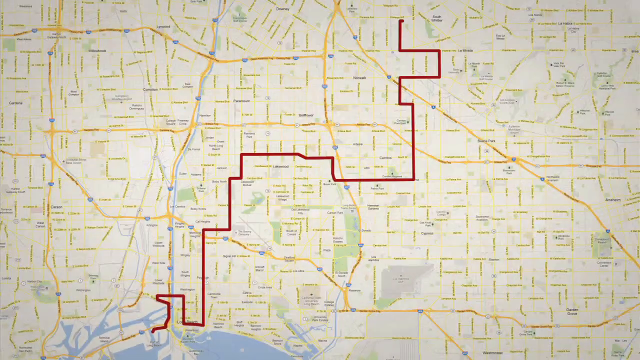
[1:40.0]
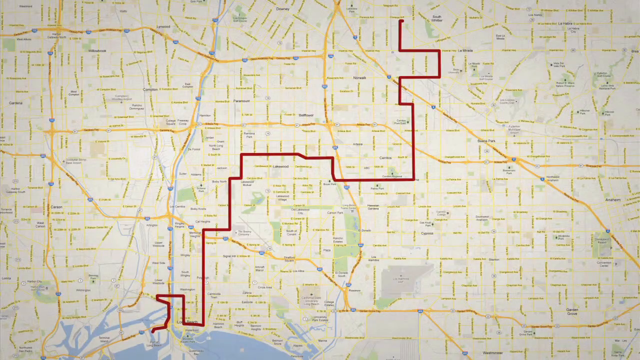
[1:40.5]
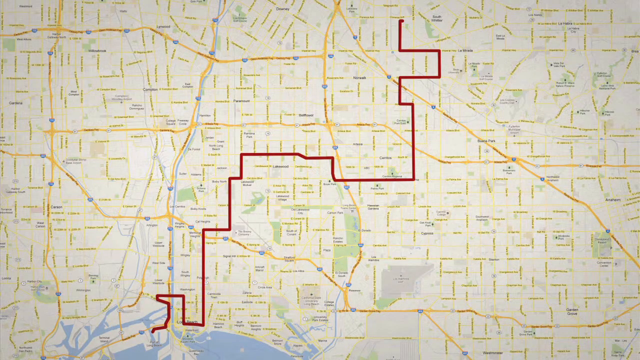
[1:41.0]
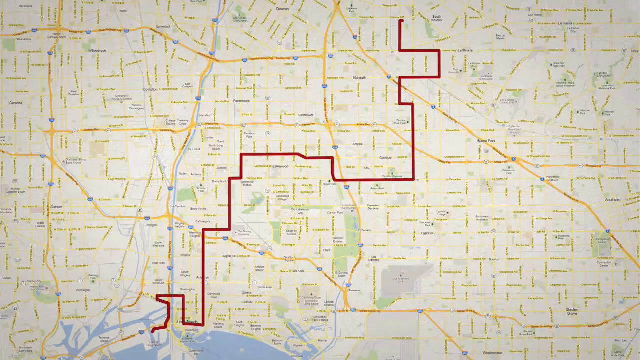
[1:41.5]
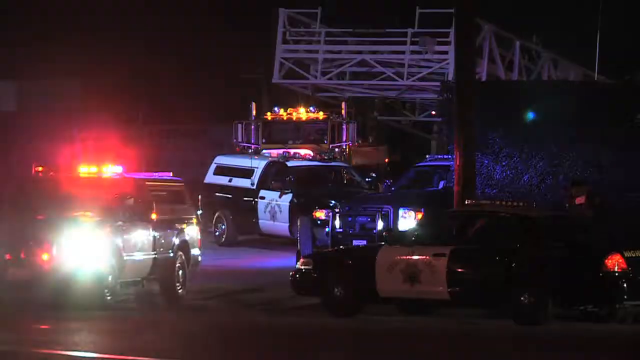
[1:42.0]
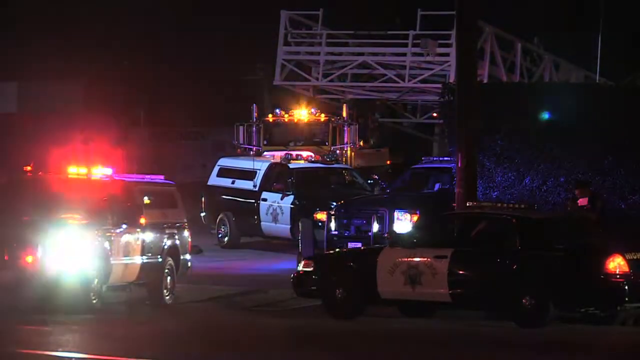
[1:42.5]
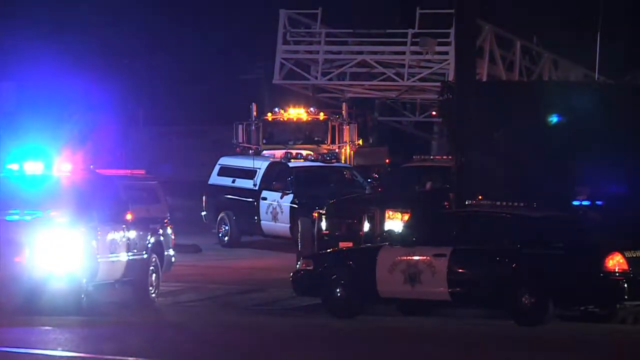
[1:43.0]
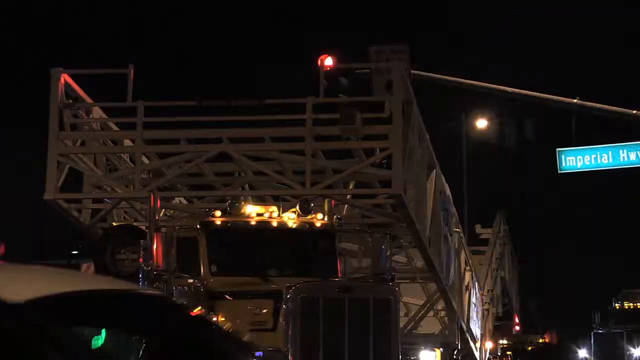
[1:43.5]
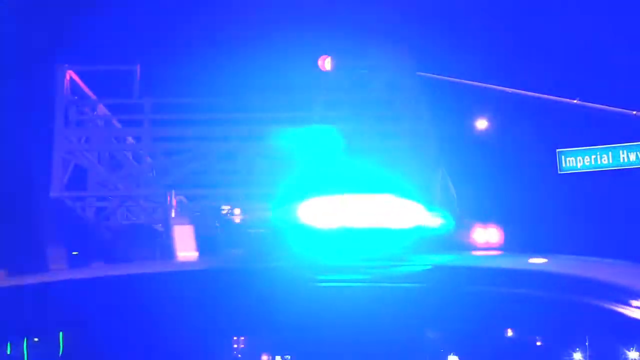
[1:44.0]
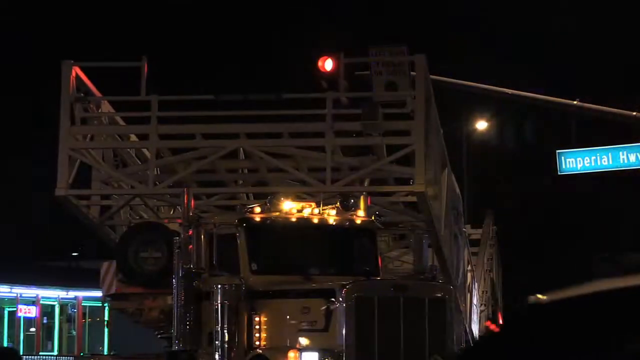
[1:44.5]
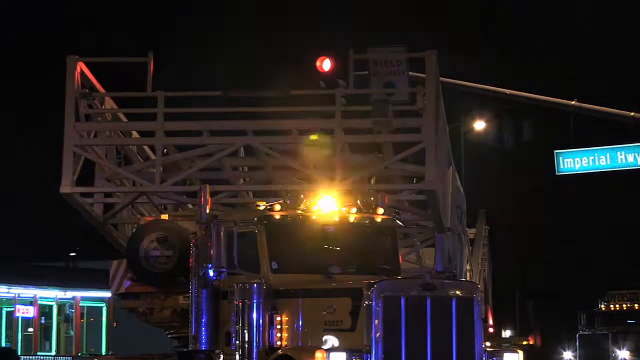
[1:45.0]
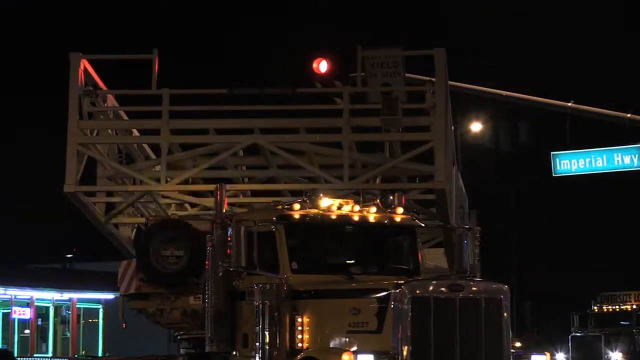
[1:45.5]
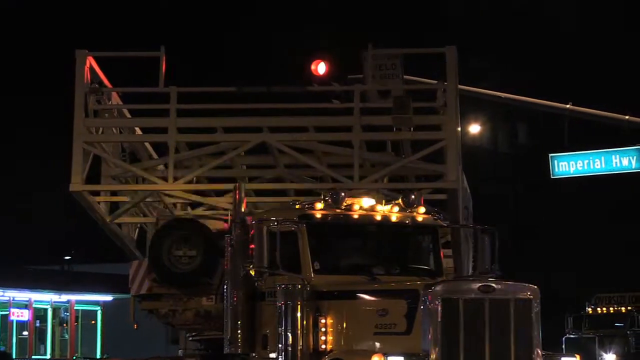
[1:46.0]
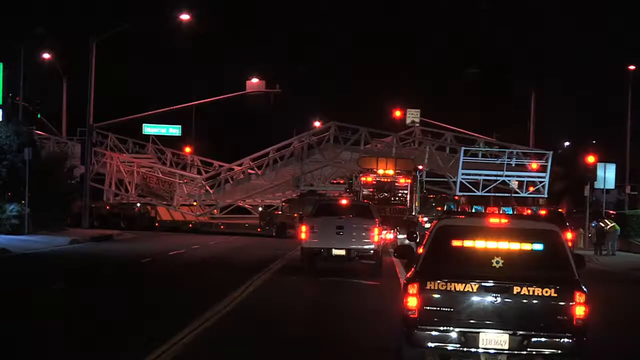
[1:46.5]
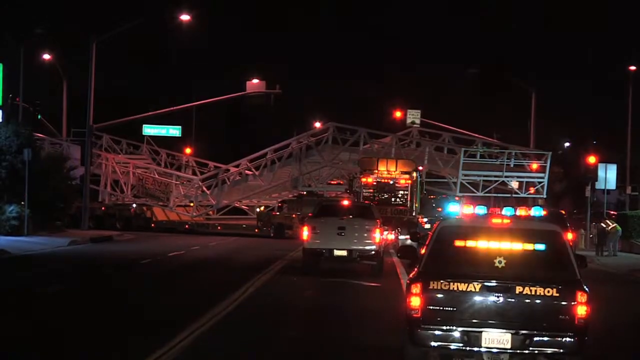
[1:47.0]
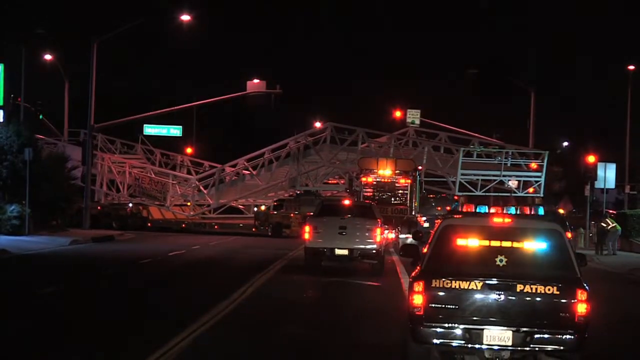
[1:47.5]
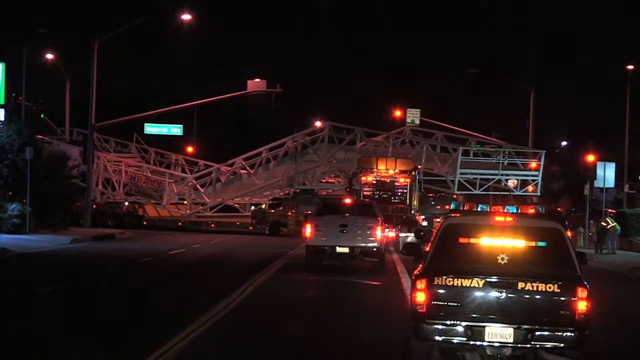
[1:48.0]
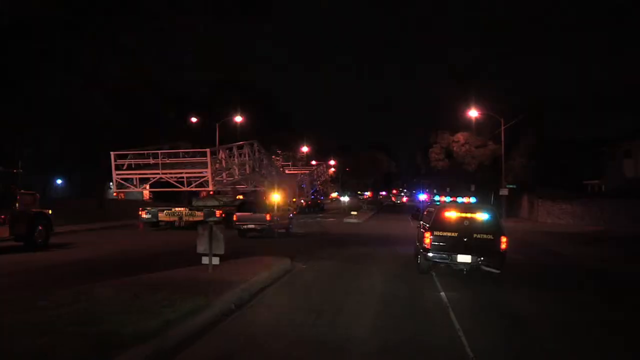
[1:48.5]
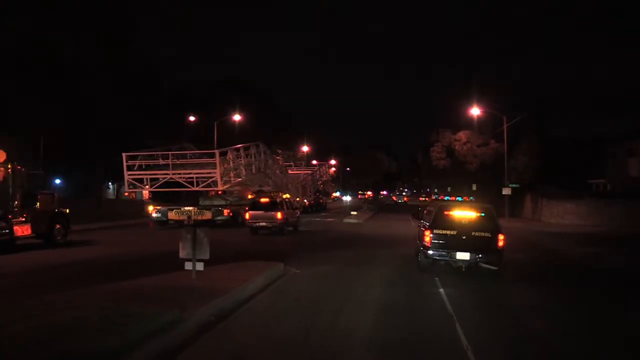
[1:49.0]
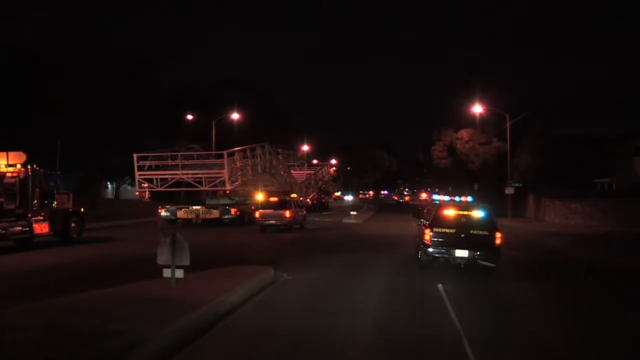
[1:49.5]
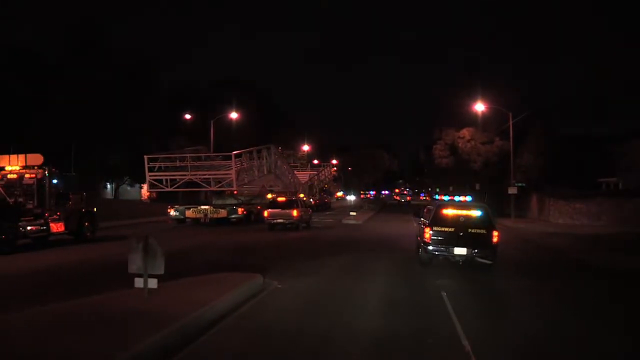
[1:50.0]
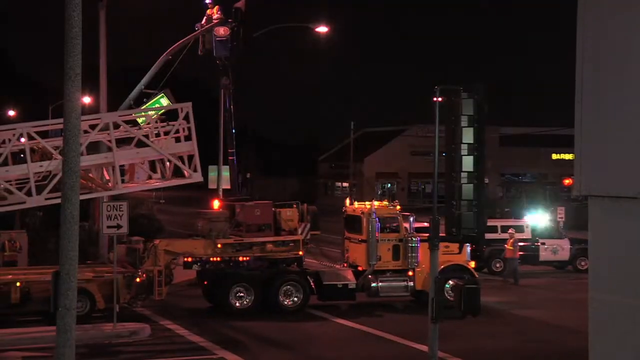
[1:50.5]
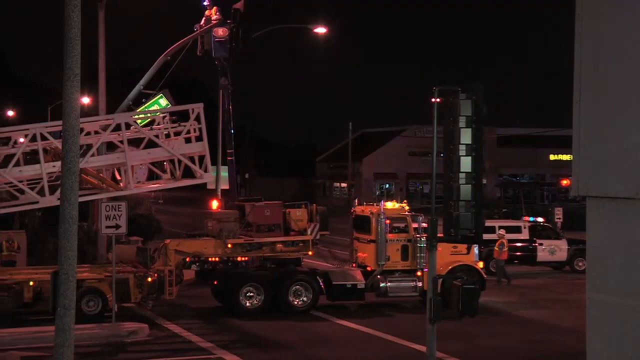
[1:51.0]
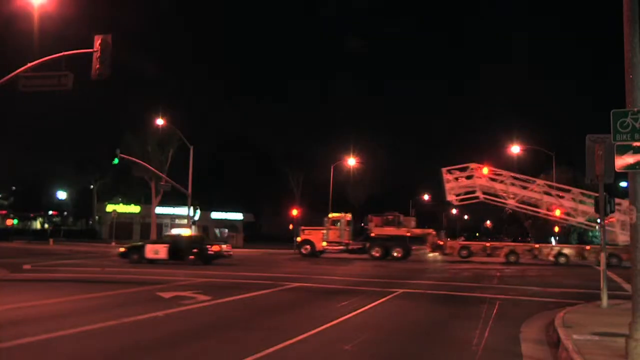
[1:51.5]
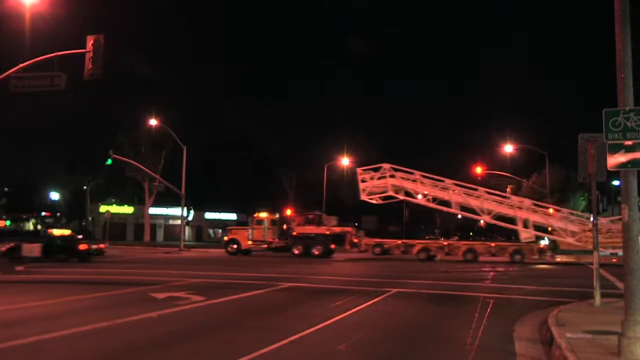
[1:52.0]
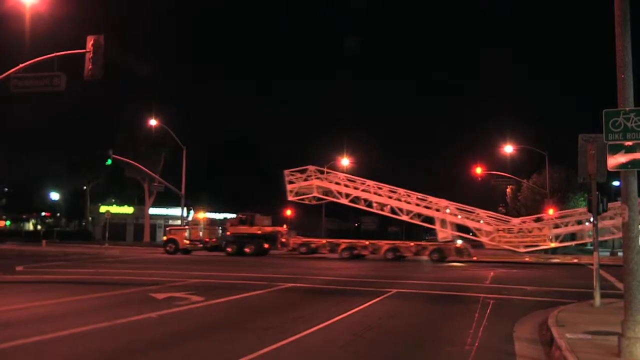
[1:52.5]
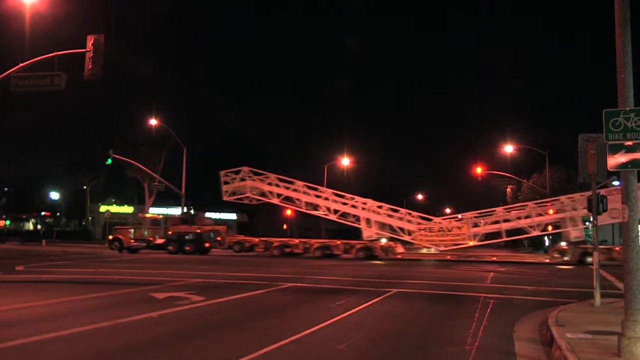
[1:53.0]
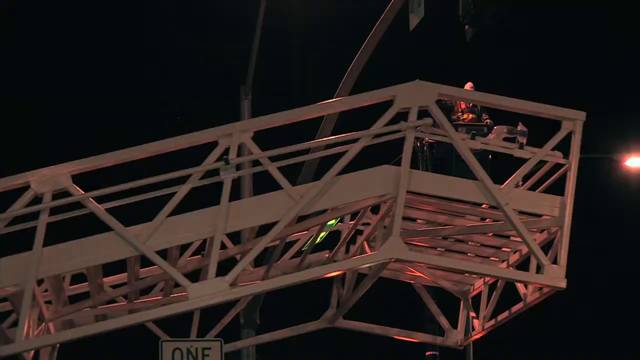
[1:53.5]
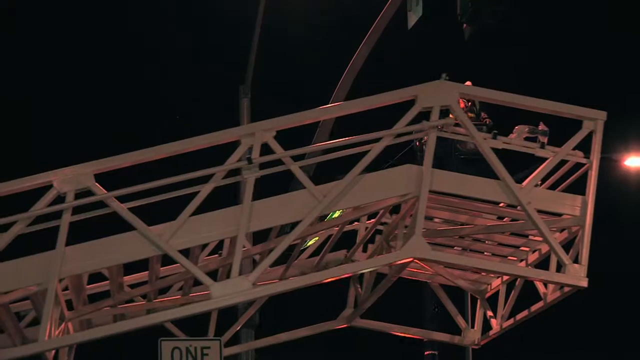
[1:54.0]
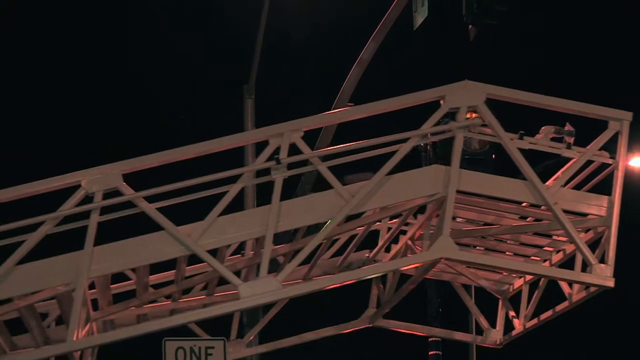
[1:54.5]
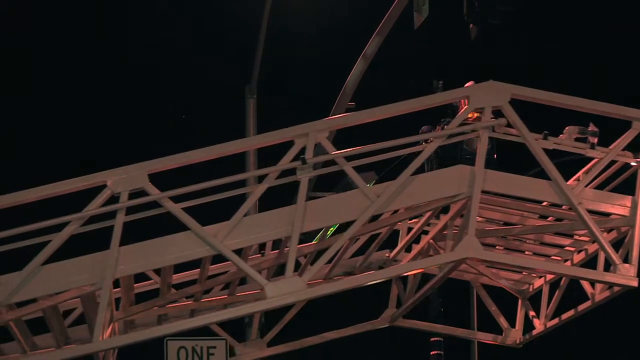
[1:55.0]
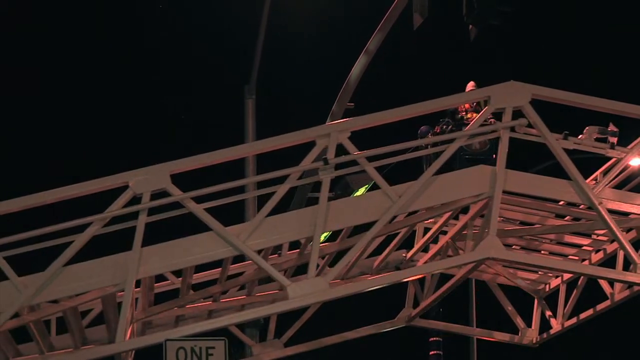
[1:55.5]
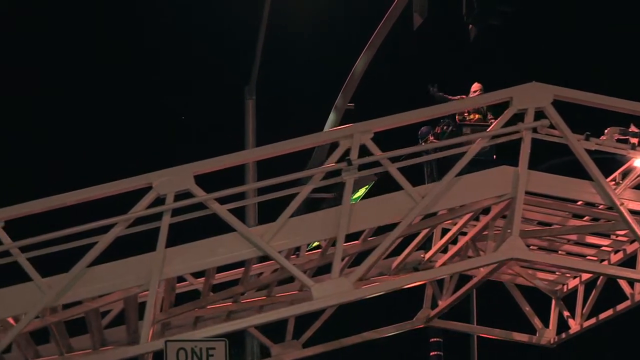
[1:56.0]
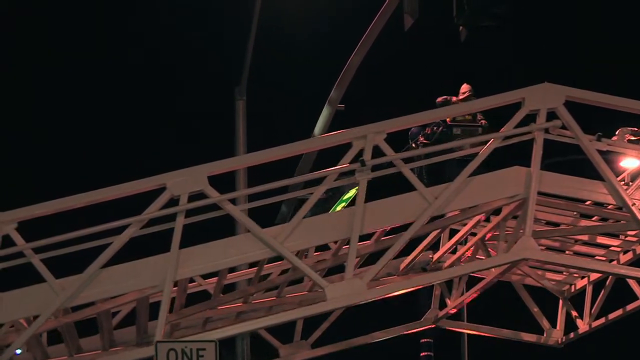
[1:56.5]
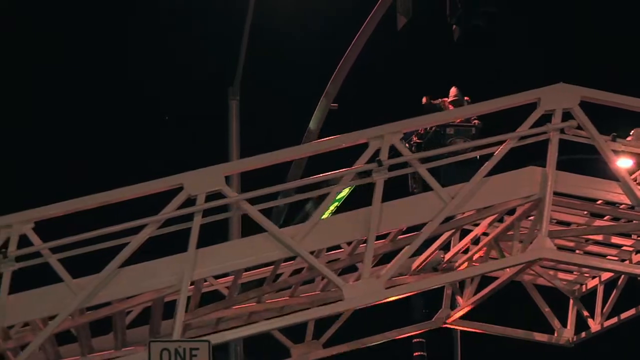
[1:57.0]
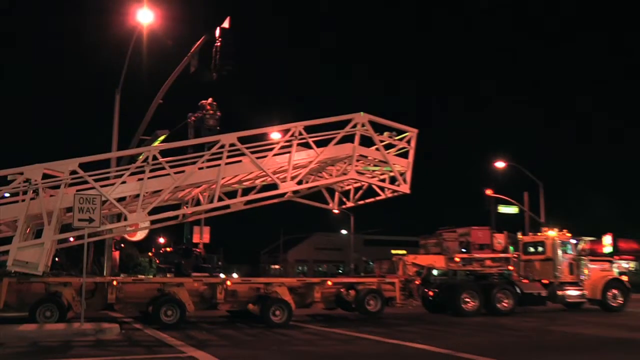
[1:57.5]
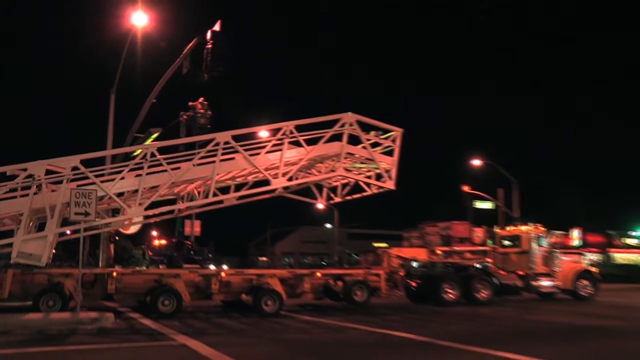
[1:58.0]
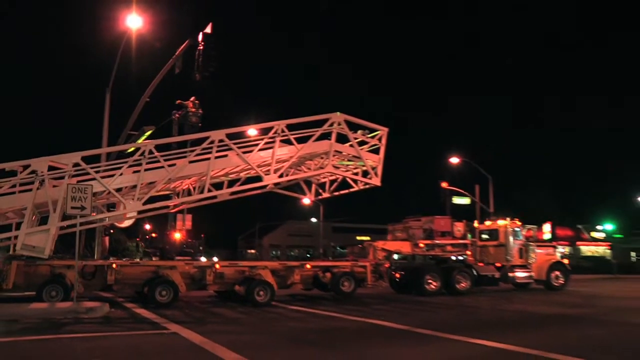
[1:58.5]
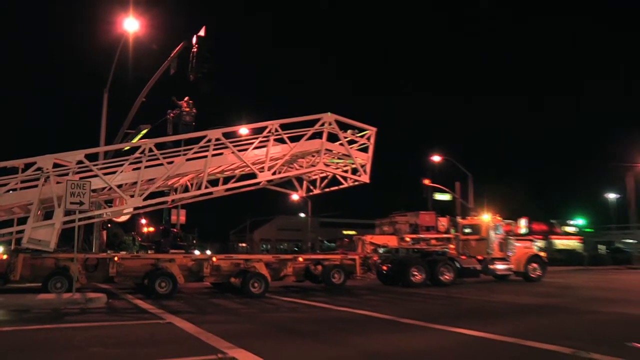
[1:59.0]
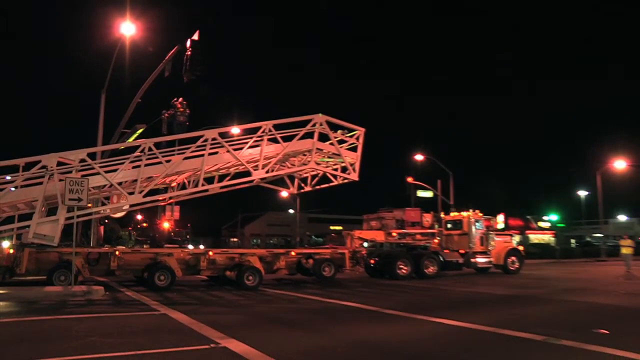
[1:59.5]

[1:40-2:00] The full route is shown in red on the map, then the scene quickly transitions to what look like police cars with red and blue lights on. It is nighttime and very dark, so the lights look brighter. The beams and material appear to be transported, probably with a police escort. A street sign says "Imperial Highway". A truck transporting the beams moves along the road, and what looks like highway patrol, lots of cars and police with their lights on are helping move this oversized load. The street lights are on, and there are trees along the side of the road. The trucks go down the road with police cars in front and more behind. The load has what looks like a yellow banner that says "HEAVY" in uppercase black bold letters. An up-close view of part of the white frame shows a construction worker in a little bucket, sort of helping to direct things to make a safe path as the truck goes.